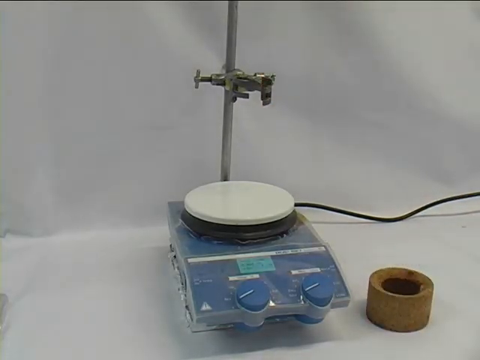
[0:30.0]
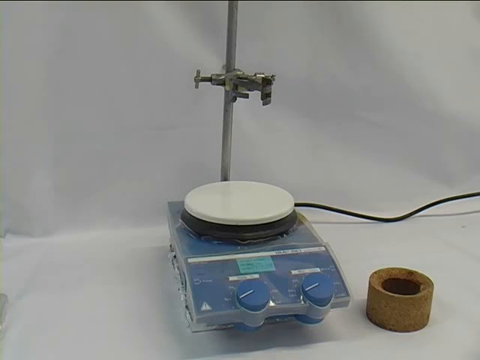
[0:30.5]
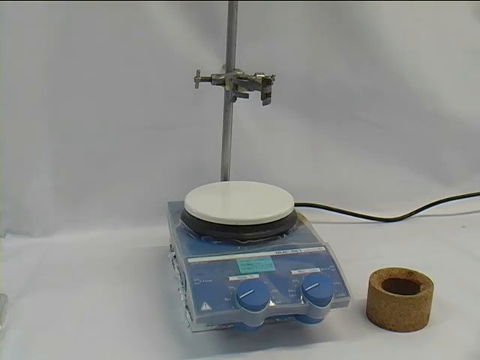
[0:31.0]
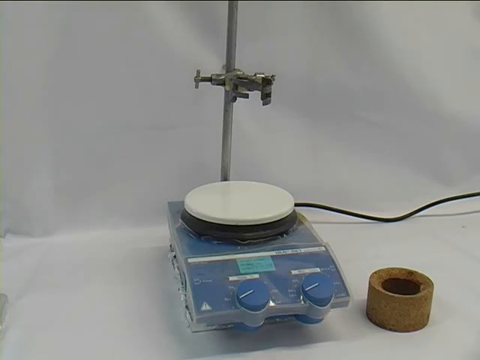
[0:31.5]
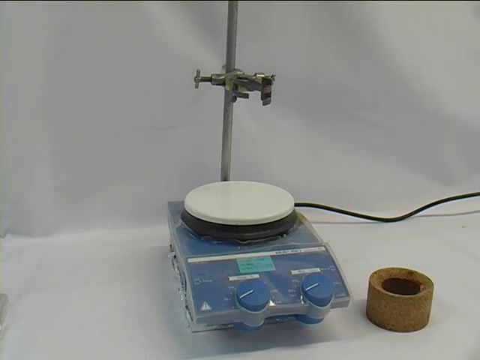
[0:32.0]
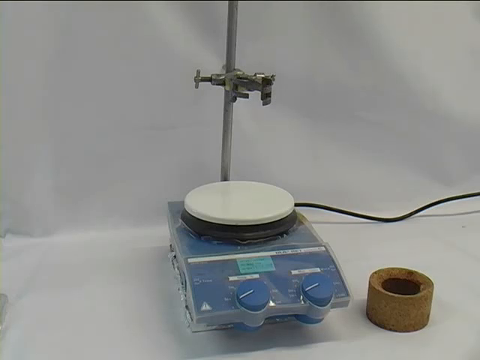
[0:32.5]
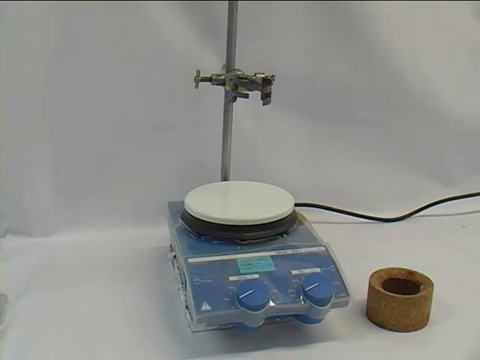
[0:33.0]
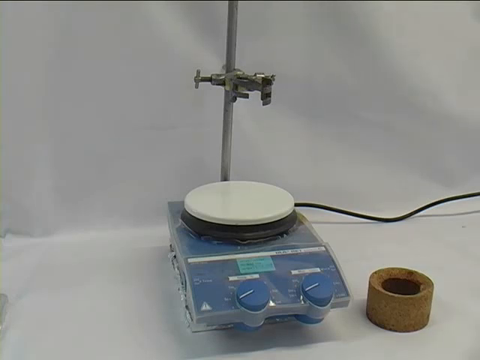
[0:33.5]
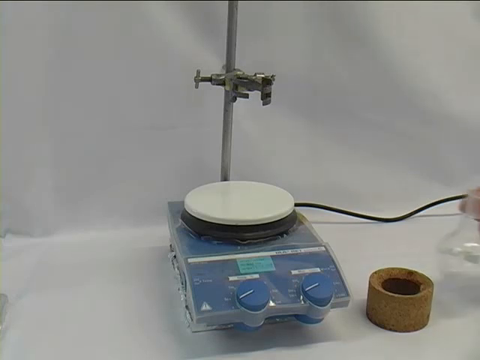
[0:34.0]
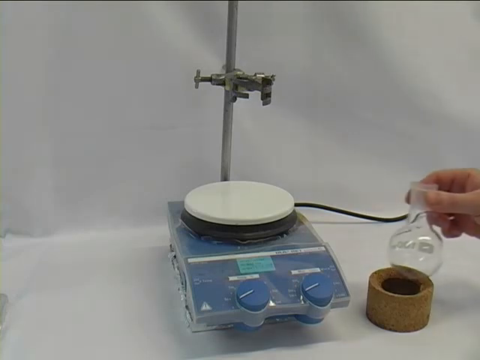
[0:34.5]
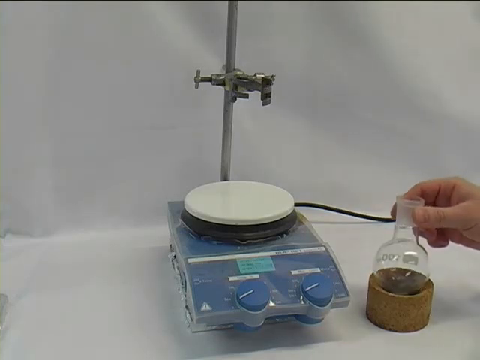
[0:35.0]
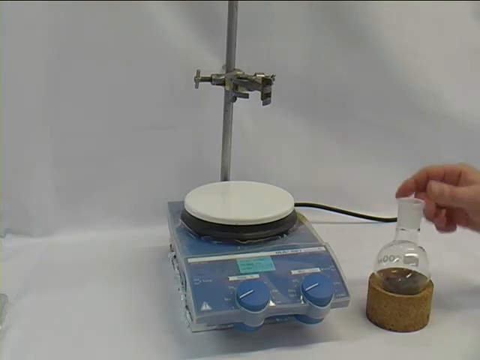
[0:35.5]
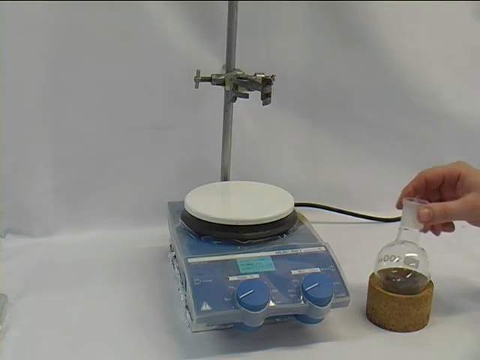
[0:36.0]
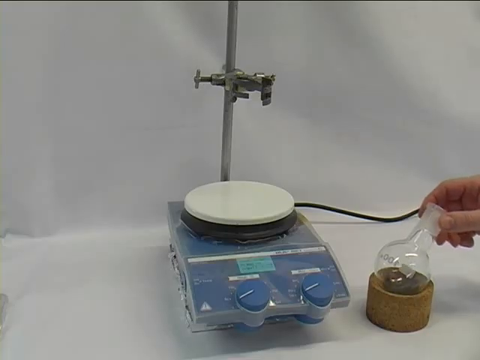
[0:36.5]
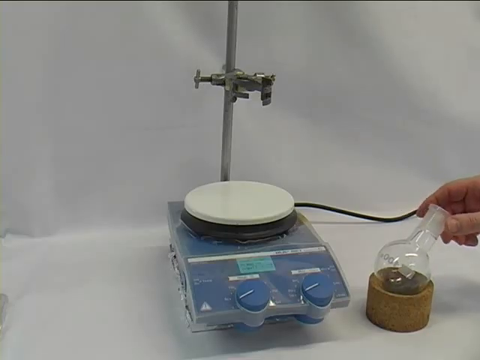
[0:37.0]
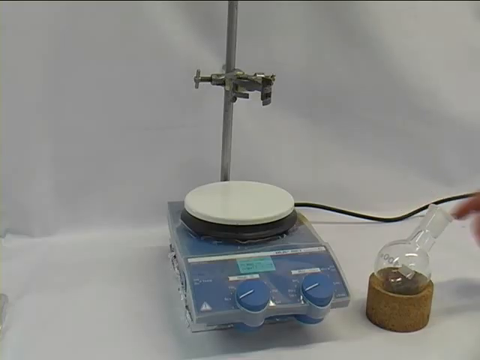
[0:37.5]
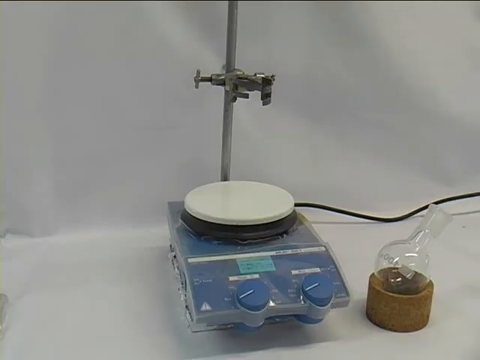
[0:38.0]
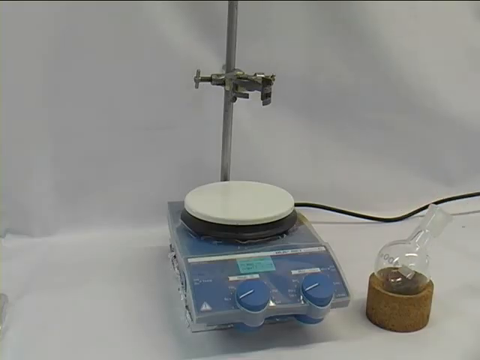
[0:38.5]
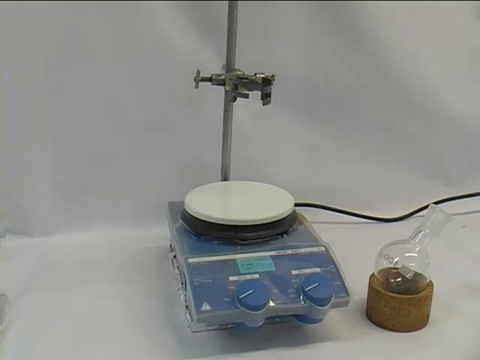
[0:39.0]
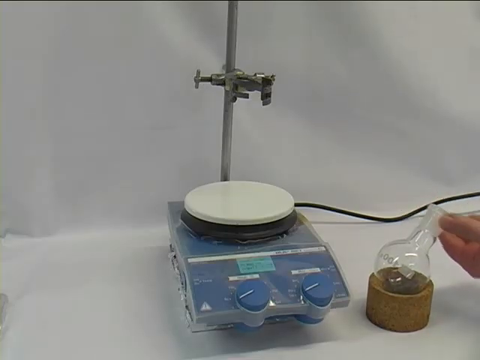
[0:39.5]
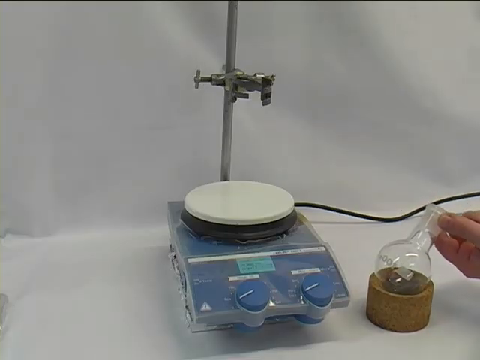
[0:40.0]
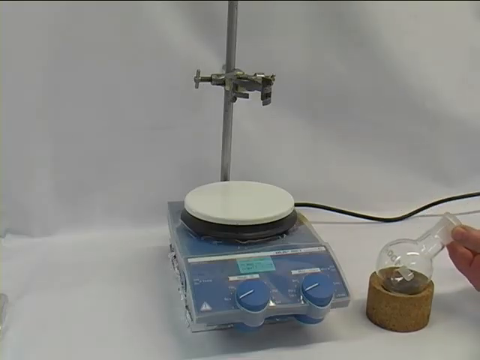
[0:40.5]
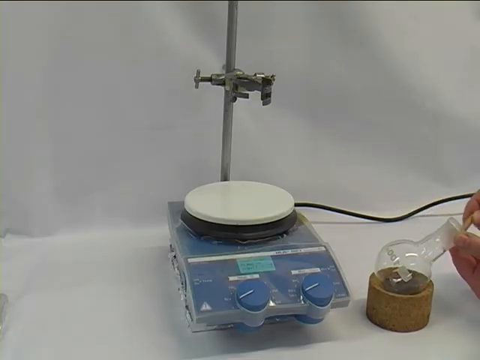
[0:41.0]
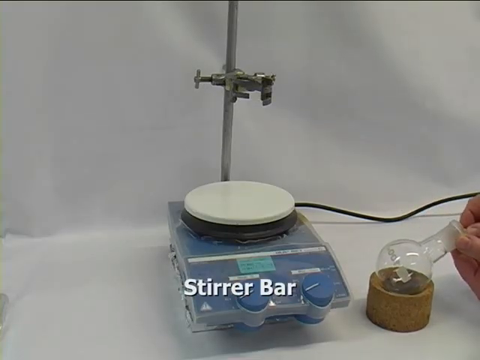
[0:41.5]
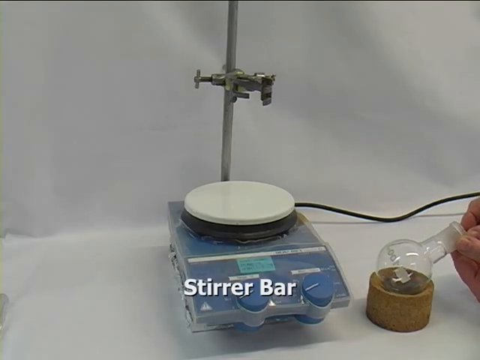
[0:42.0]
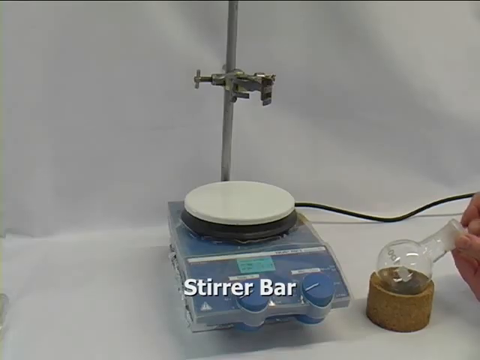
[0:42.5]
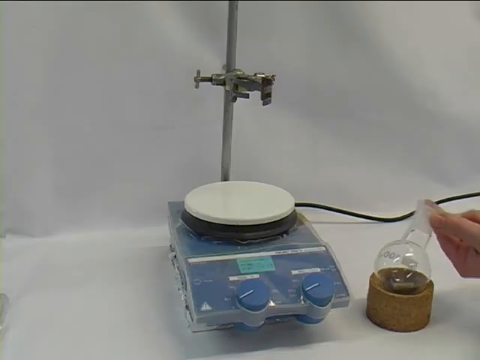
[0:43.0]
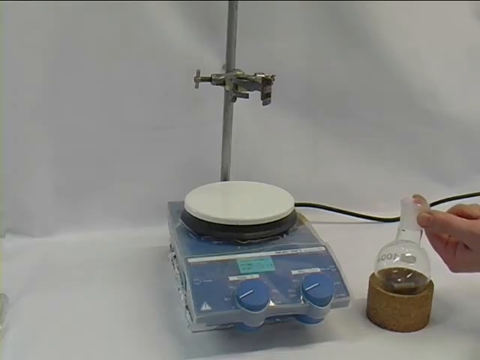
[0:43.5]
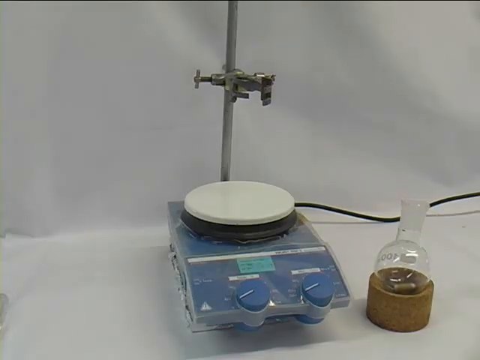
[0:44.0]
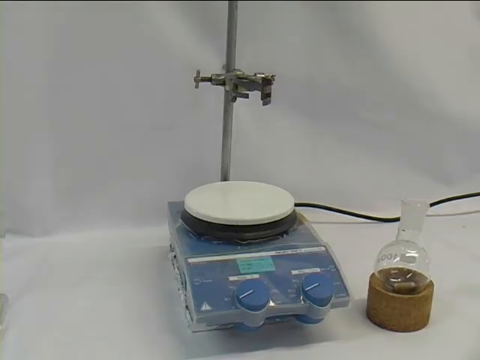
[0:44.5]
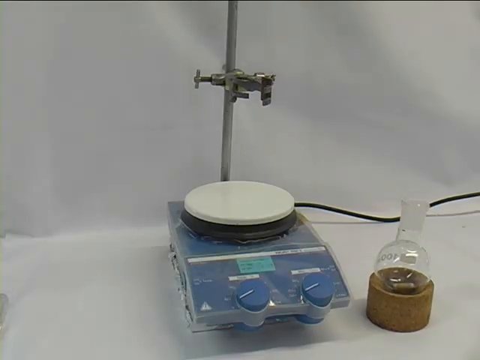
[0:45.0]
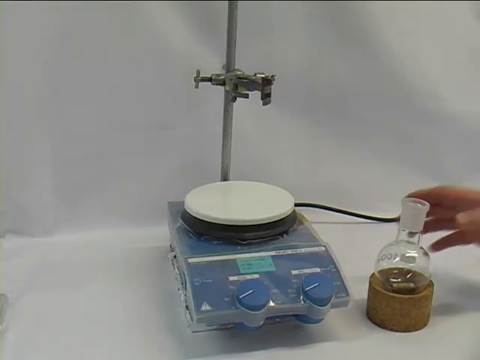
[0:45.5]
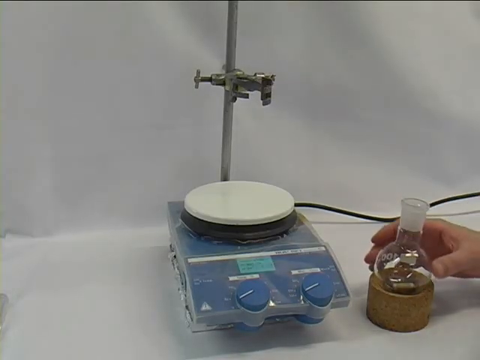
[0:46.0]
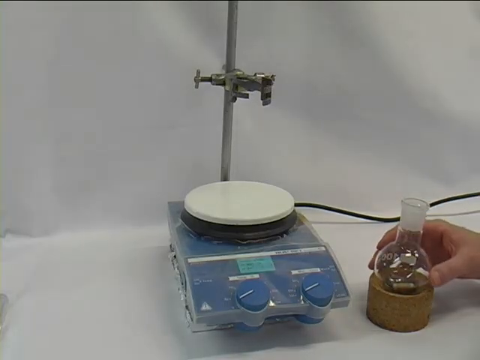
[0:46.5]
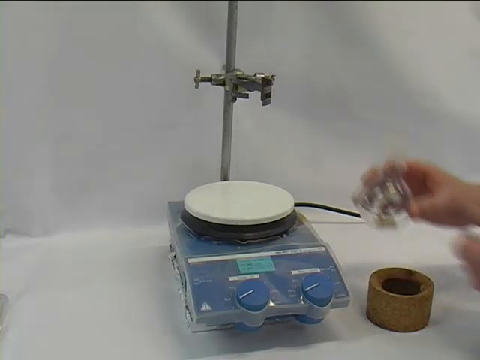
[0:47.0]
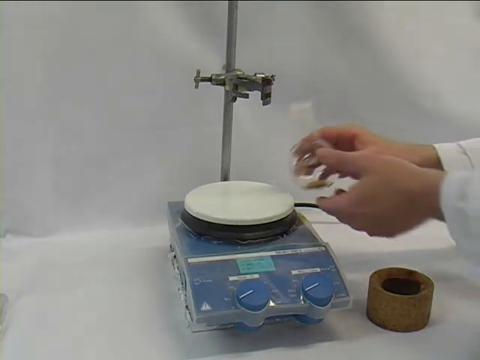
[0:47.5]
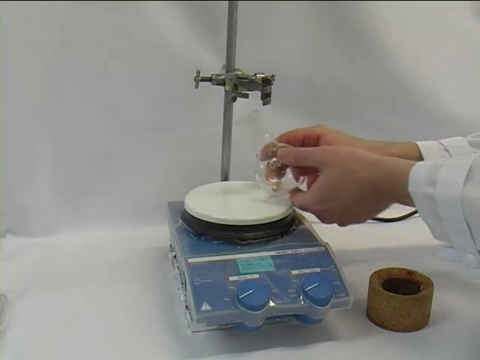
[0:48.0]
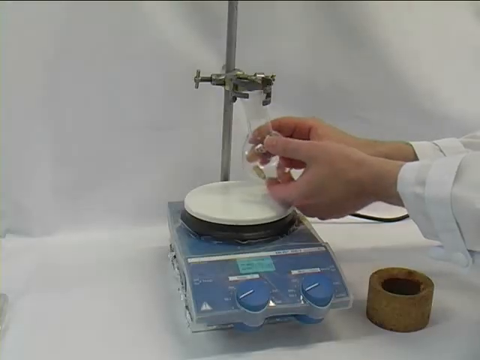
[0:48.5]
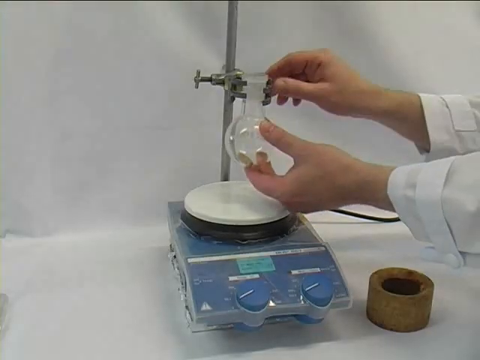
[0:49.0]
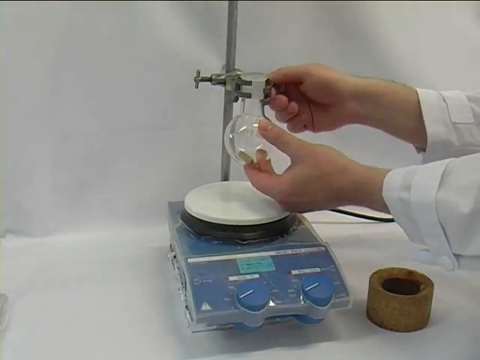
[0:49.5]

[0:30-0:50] A blue machine has two blue knobs and what appears to be a clear blue plastic film over it, maybe for protection. On top of the machine is a table that looks circular. A rod sticks out of the back of the machine, apparently made of metal, and another device is screwed onto it. An electric cord comes out of the back of the machine and goes off to the right along the wall. A person with a wide hand sets what looks like a vial on top of a little vial holder that looks like it is made of cork or something similar. They place what looks like a capsule in the vial, then put the vial in some kind of clamp attached to the rod coming out of the back of the machine.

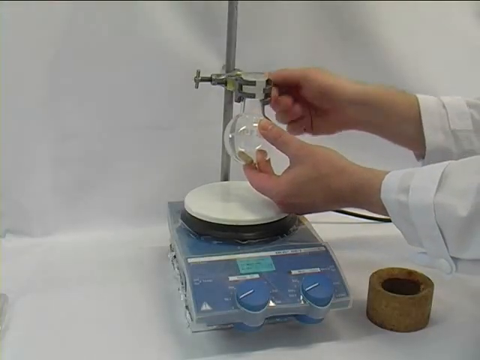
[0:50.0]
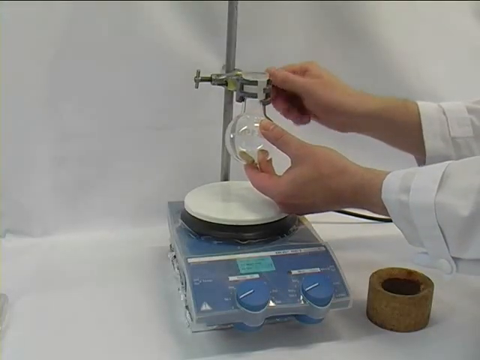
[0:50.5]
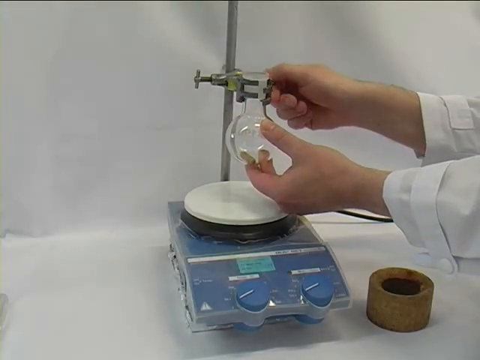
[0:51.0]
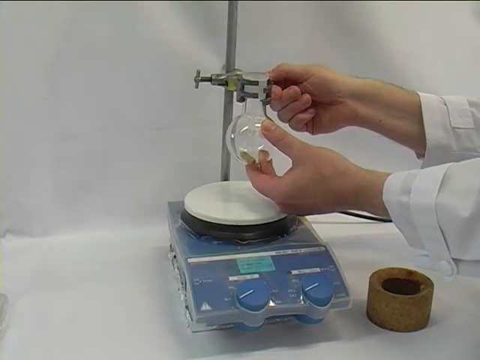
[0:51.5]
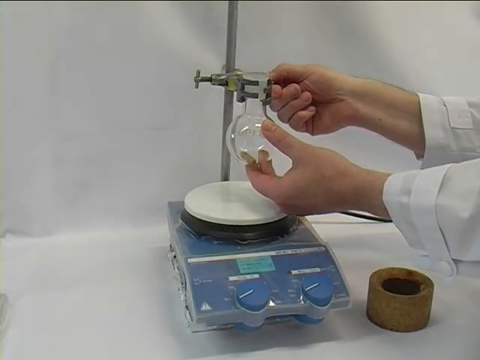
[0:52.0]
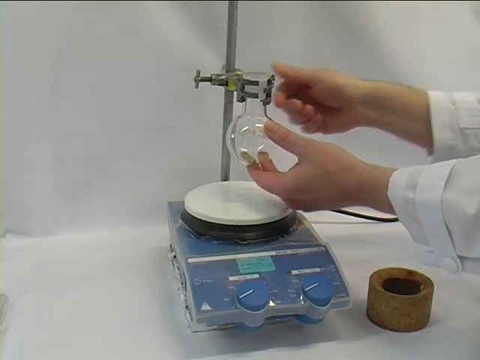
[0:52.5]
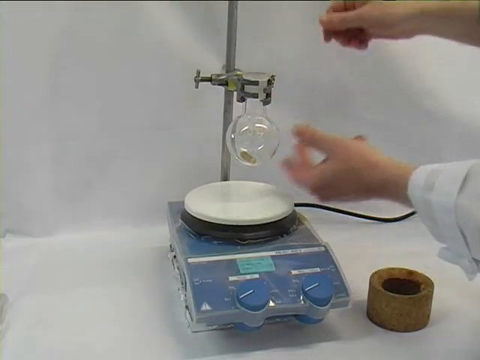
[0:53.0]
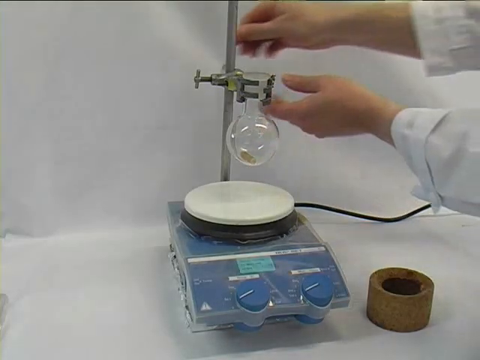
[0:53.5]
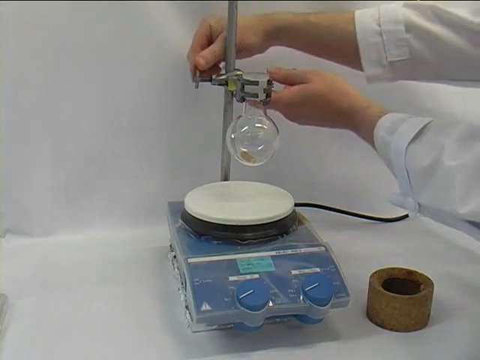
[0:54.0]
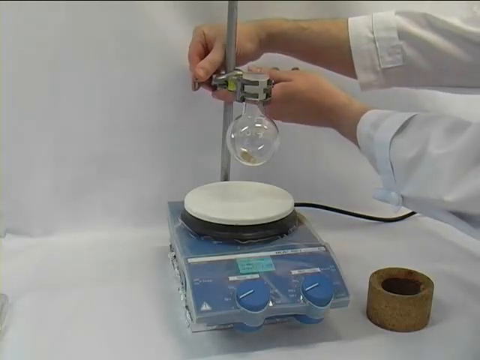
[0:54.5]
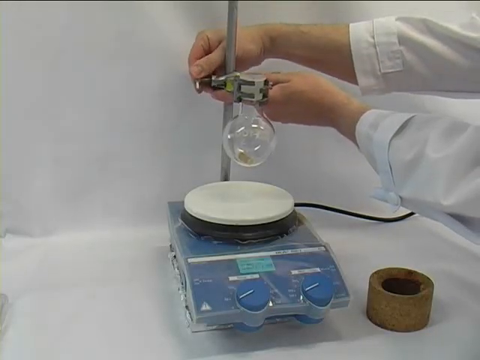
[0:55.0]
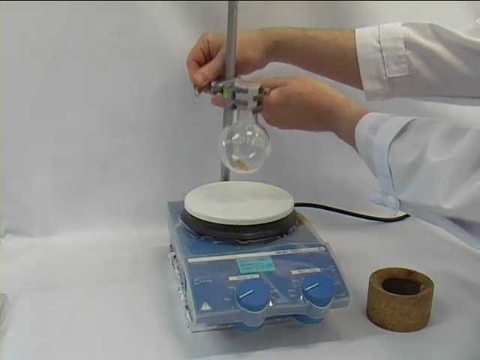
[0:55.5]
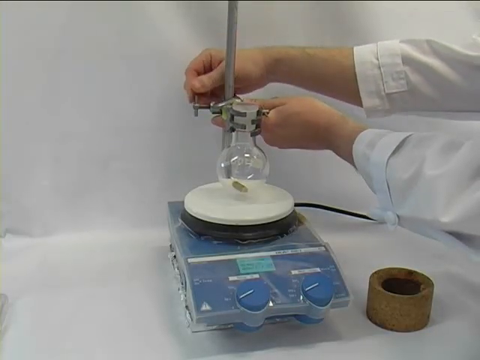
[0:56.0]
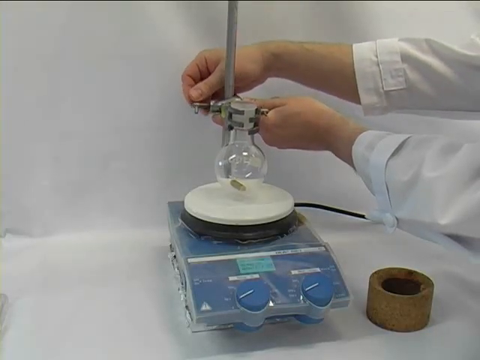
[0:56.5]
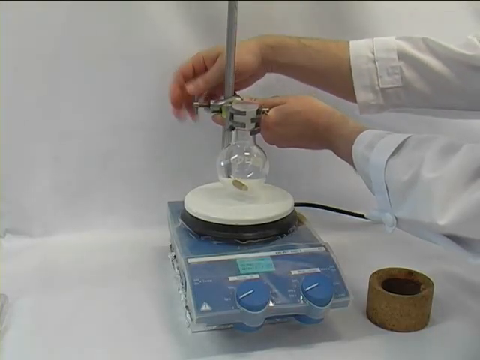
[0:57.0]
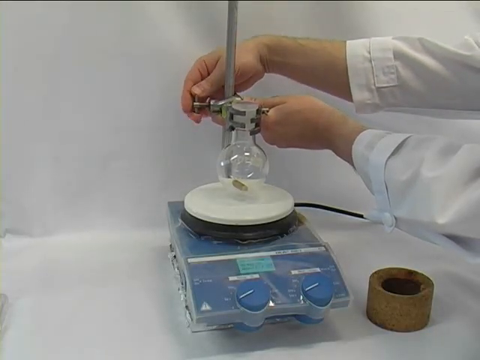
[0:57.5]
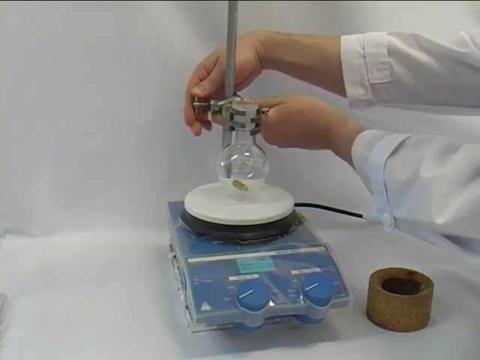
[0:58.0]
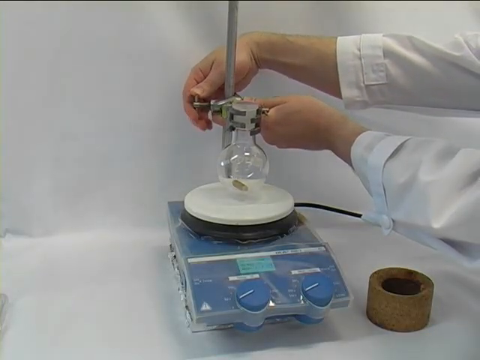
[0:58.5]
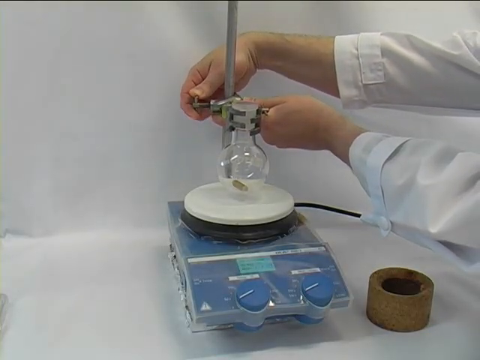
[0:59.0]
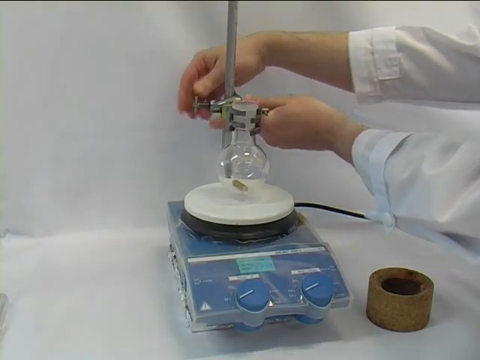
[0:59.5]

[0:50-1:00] A blue machine has two blue knobs, each with a line pointing to some setting, such as temperature or speed. Two white hands with lab coat sleeves on the arms hold a vial up into a clamp attached to a rod on the back of the machine. An electric cord comes out of the back of the machine, going off to the right along the wall. The vial has something in it that looks like a capsule. The wall is white, and the table the machine is sitting on is white.